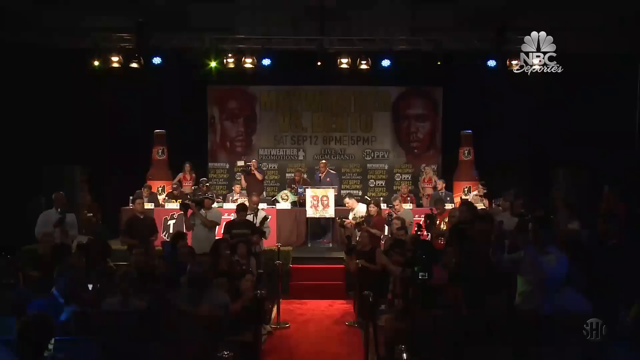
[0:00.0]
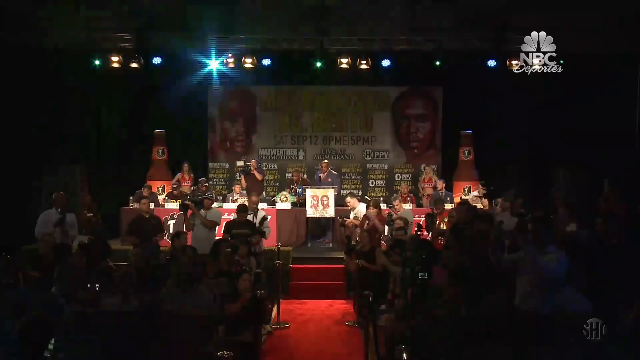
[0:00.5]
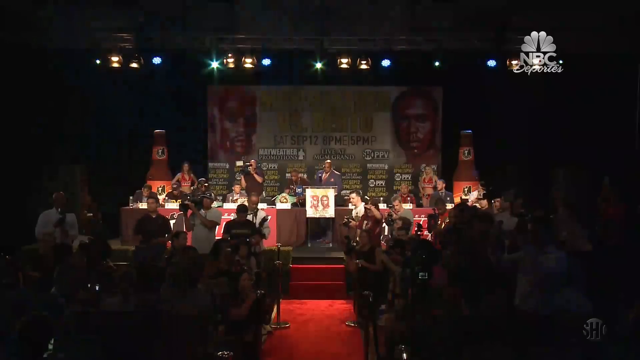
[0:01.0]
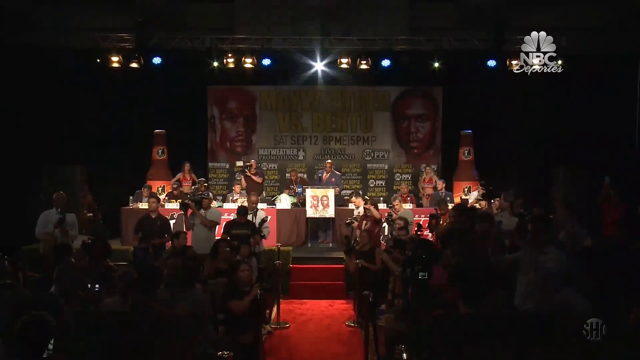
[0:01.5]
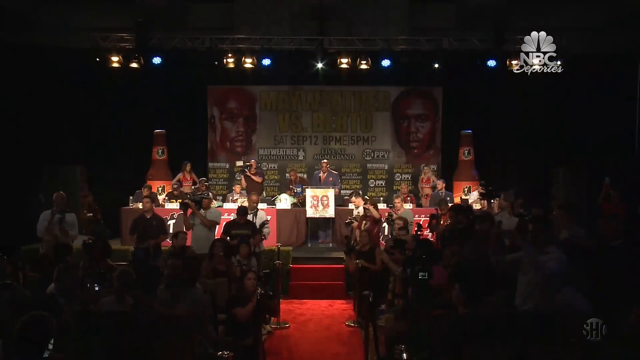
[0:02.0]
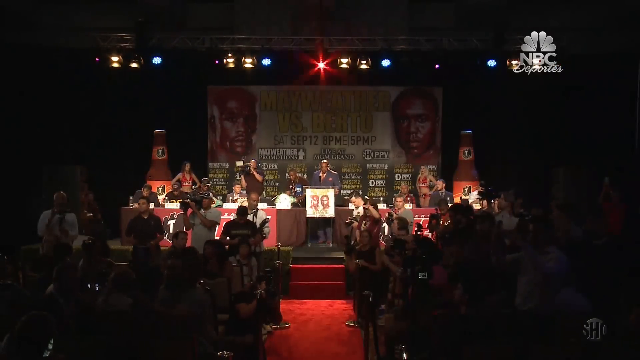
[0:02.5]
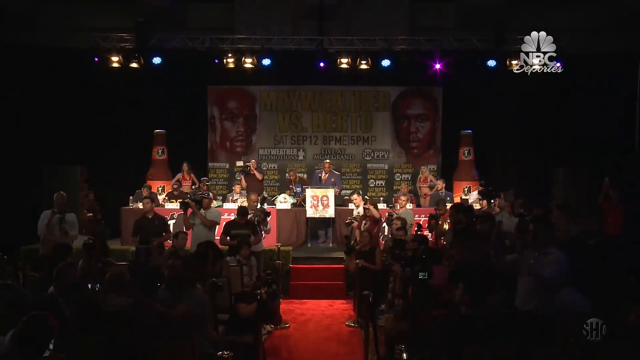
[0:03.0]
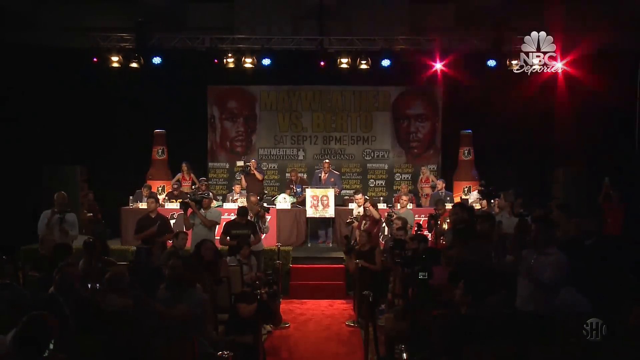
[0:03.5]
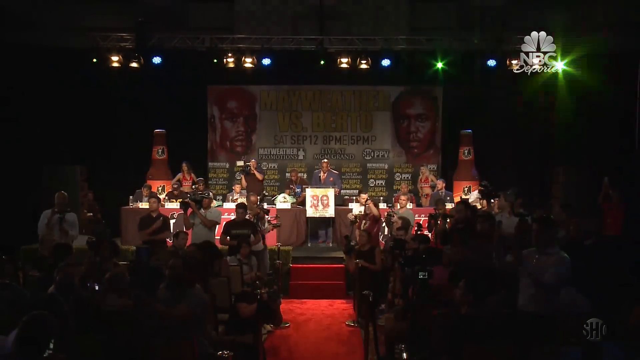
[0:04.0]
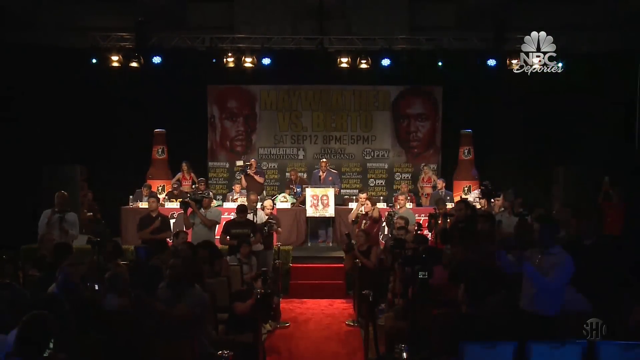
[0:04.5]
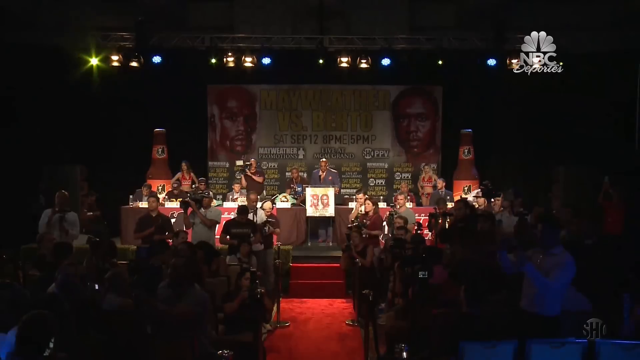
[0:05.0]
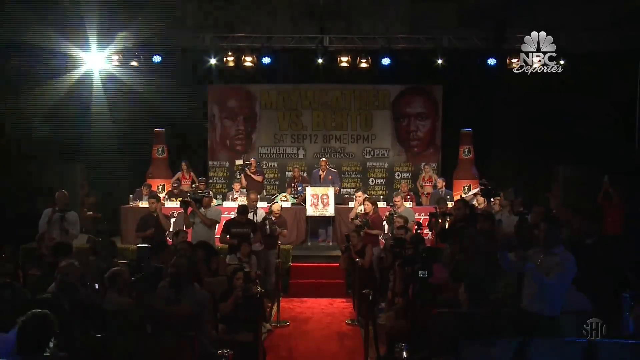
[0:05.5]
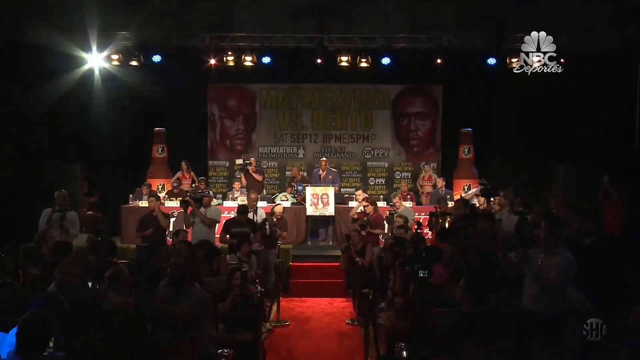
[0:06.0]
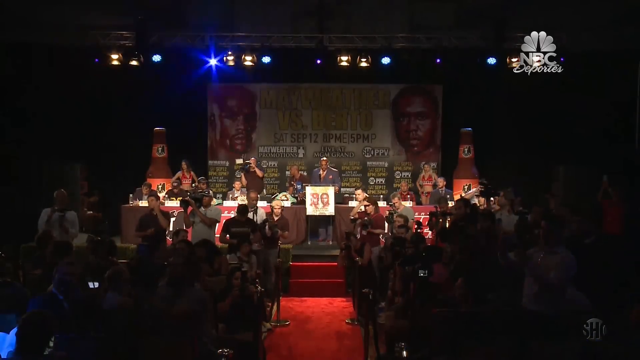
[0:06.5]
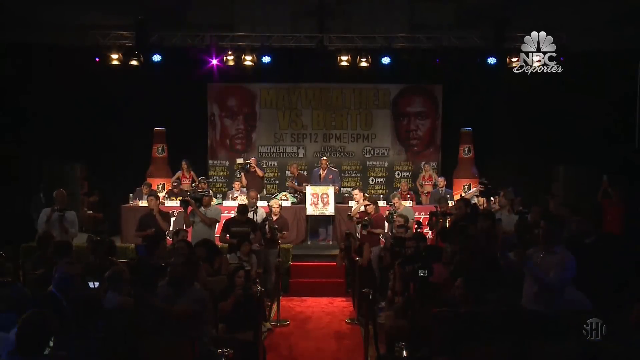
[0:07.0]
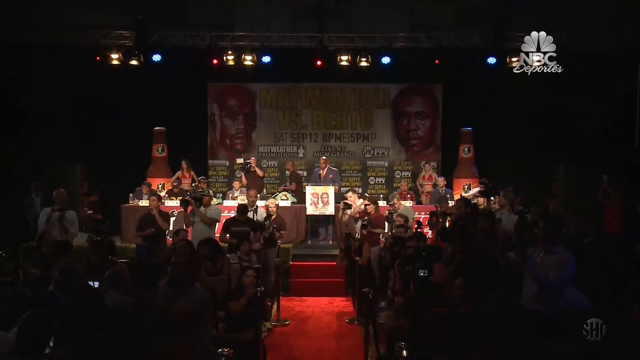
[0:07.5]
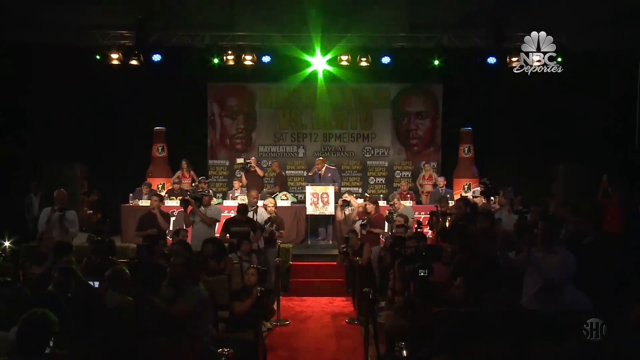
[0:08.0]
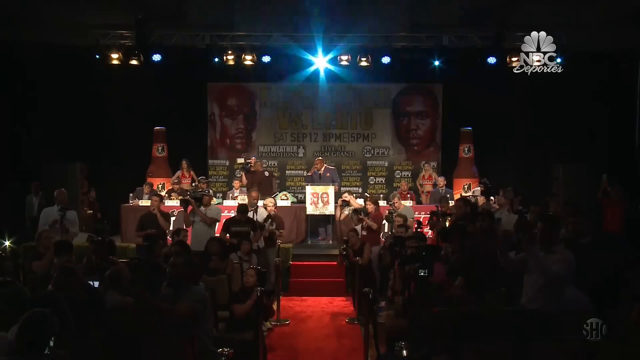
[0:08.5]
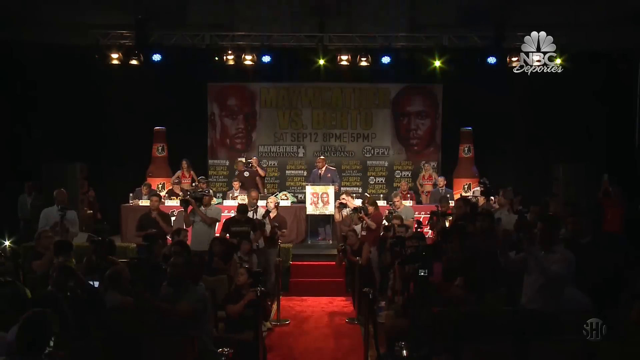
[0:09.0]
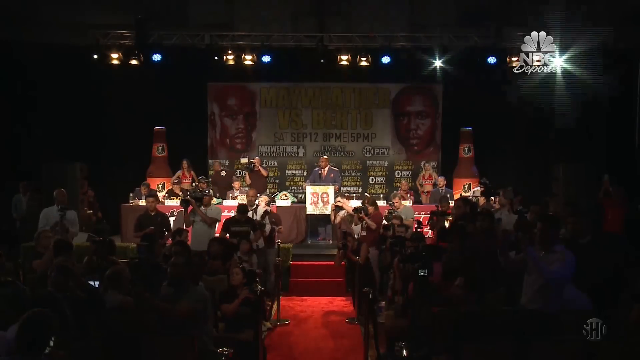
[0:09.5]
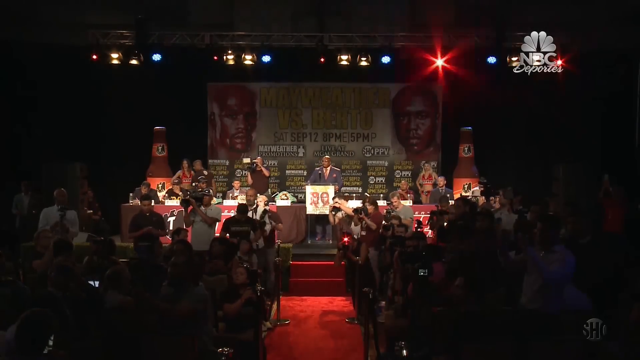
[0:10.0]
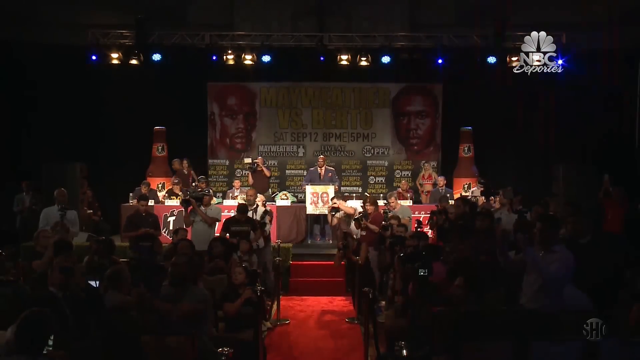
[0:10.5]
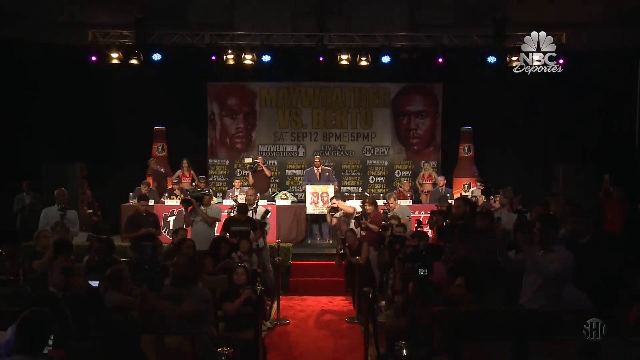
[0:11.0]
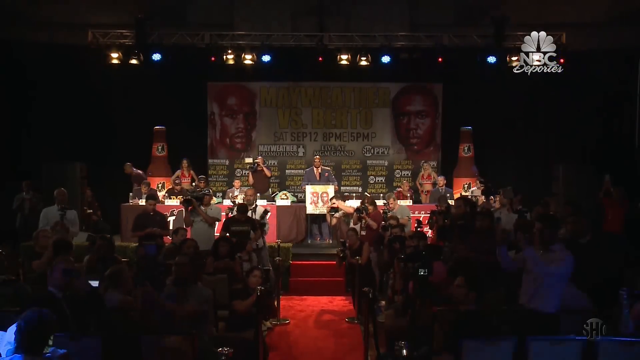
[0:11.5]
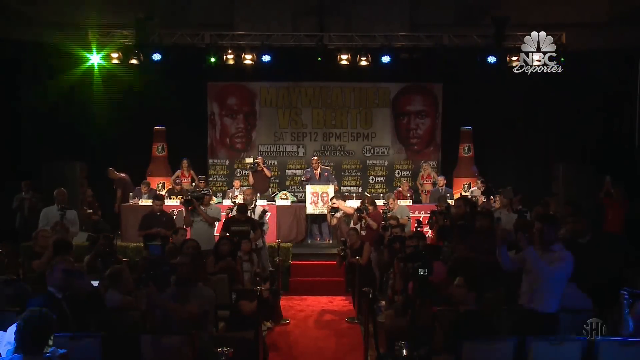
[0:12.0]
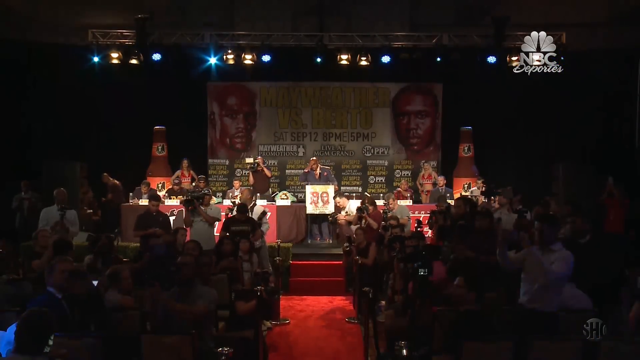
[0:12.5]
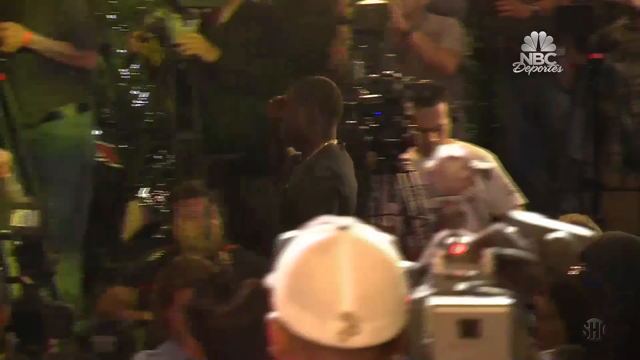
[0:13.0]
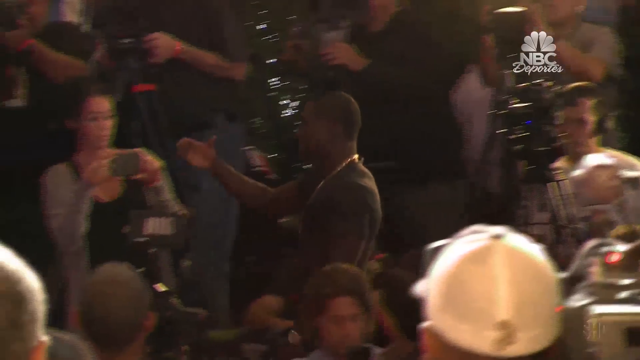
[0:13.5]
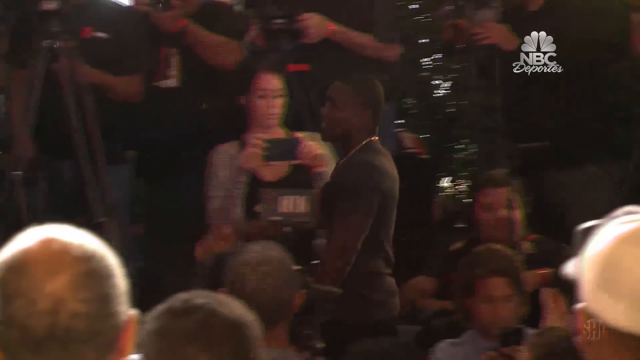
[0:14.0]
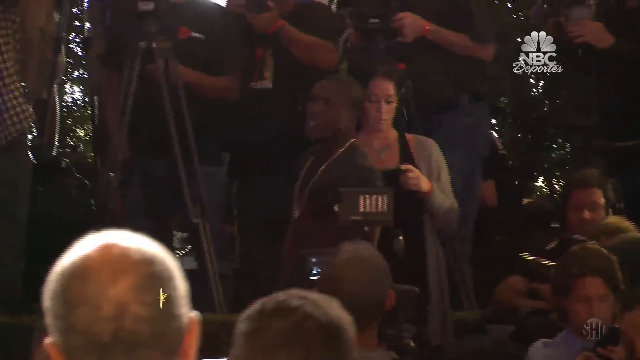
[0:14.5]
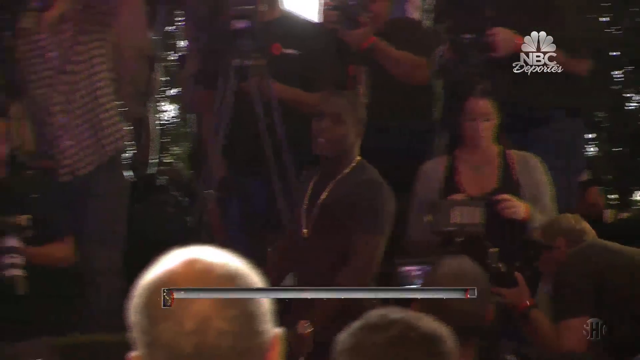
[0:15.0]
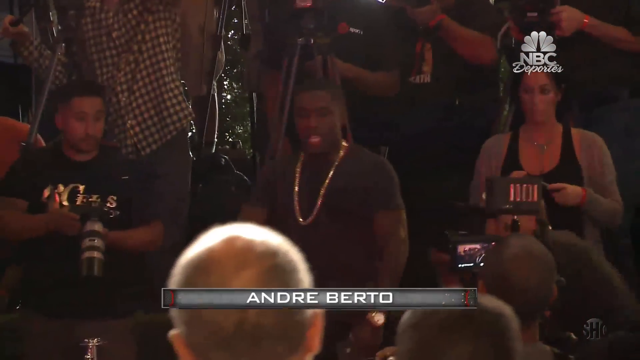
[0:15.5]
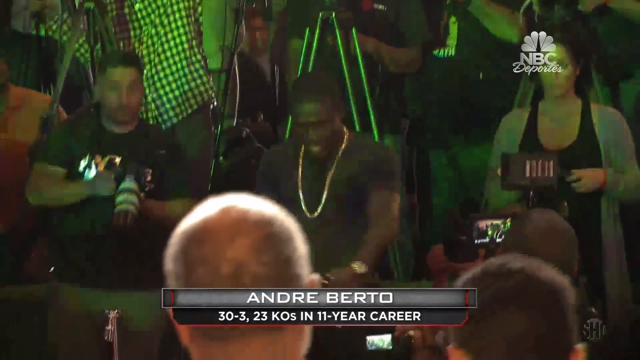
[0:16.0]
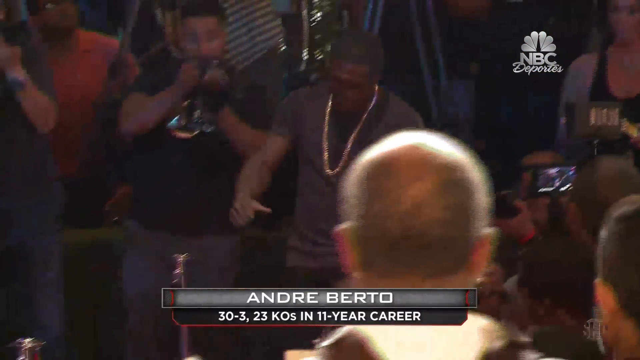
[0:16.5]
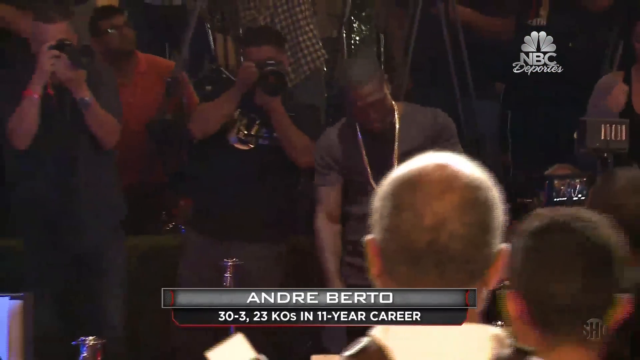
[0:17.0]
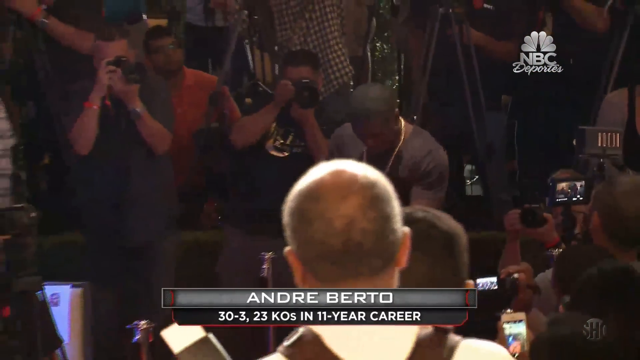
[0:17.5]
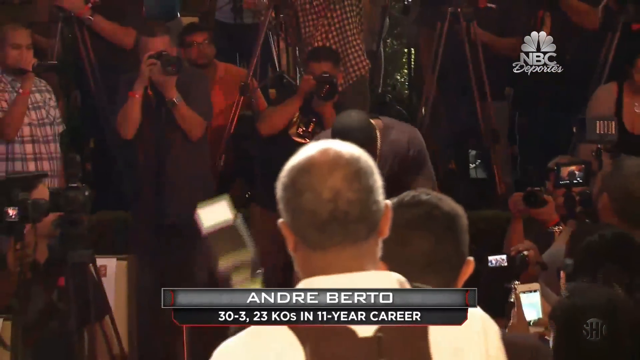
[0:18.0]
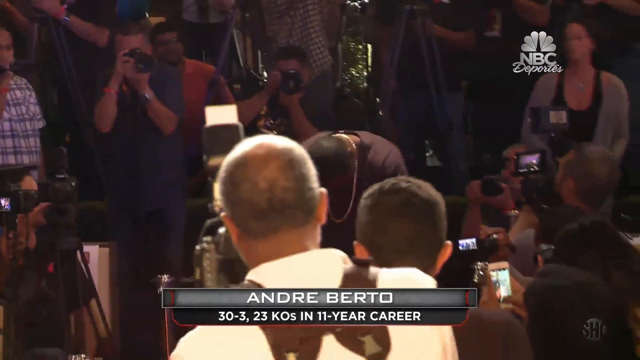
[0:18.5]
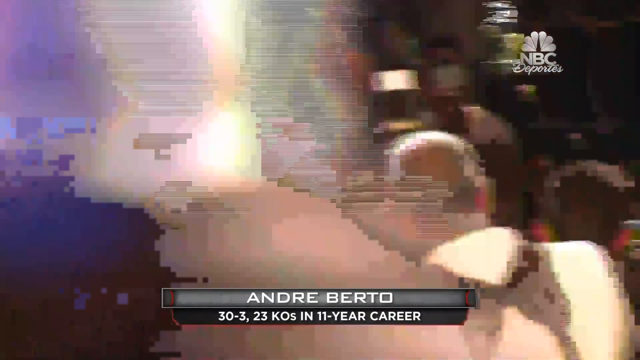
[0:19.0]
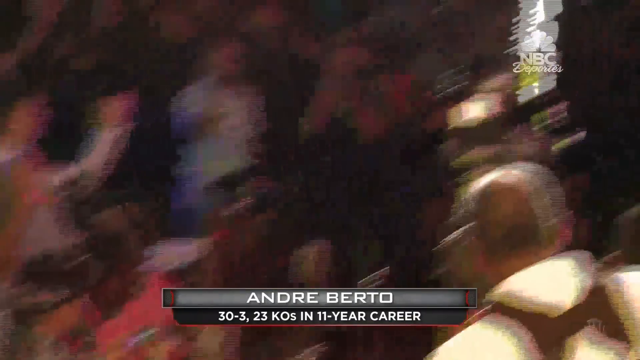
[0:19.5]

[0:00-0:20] The video opens at a conference in a far-back shot taken from the center aisle, looking toward a stage where a man stands in front of a podium. He is slightly turned to his right, and as he speaks he appears to turn slightly toward the camera. Lights above the stage are flickering; the lights on the upper right-hand side change from purple to green. Multiple people are in the audience, some sitting and some standing, with someone facing the camera. A person on the left-hand side holds a larger video camera on his right shoulder. People are taking pictures with their cameras. A person who looks like a boxer, part of the main show, walks toward the left-hand side of the frame, using his right hand to kind of move the crowd of people taking his picture. He then turns slightly to his left, facing the camera, and appears to dance a little as he gets to the stage.